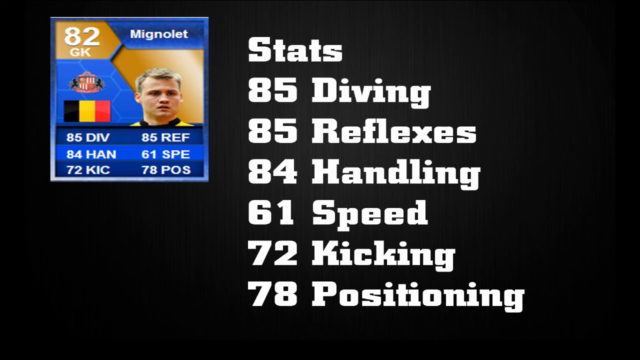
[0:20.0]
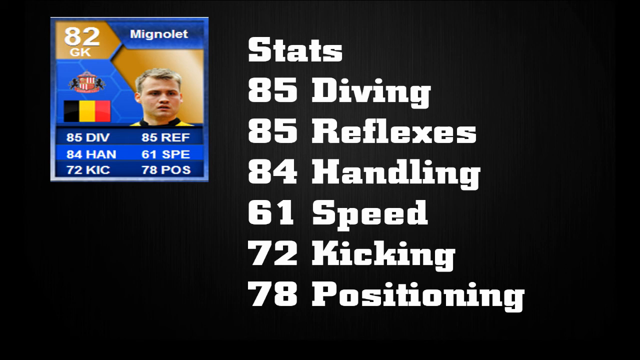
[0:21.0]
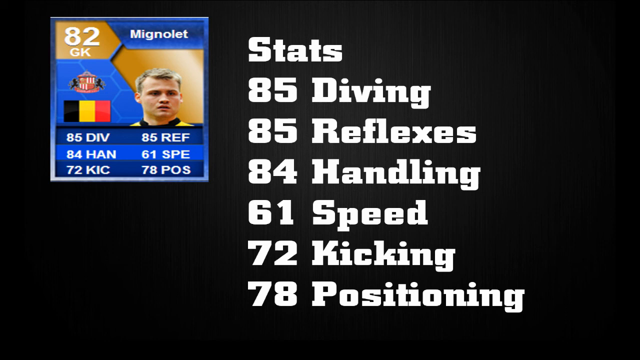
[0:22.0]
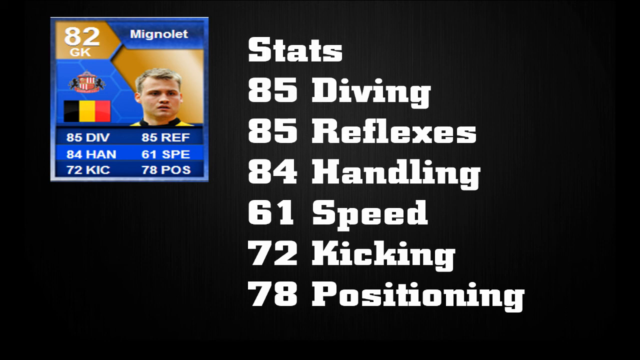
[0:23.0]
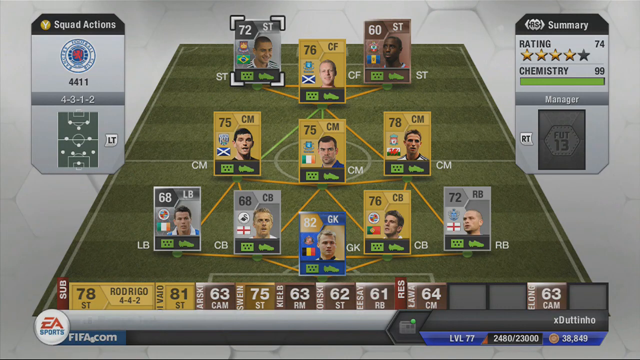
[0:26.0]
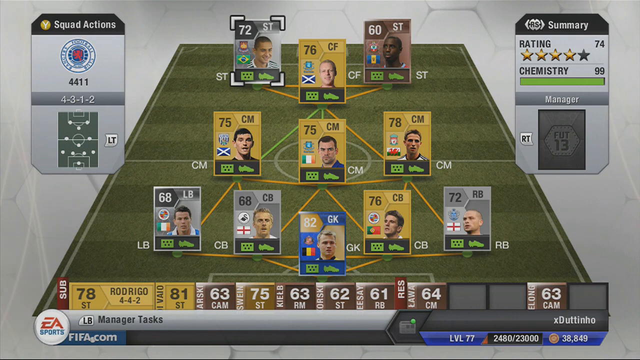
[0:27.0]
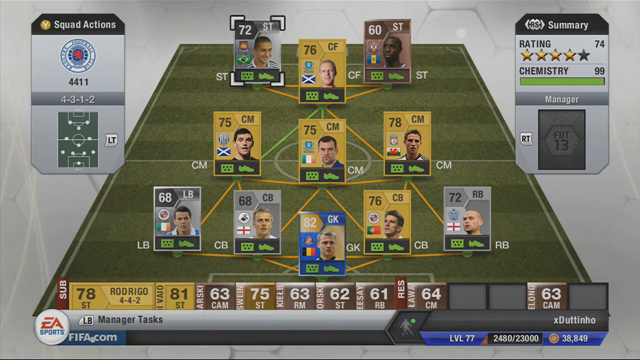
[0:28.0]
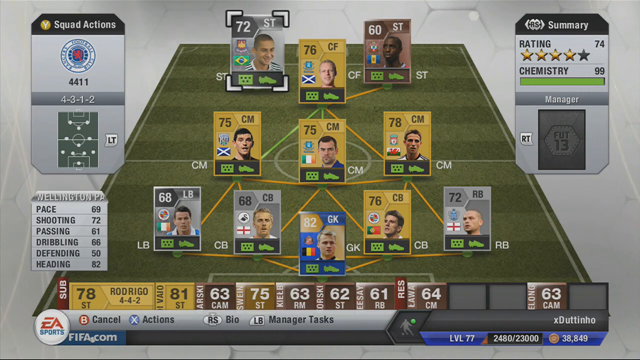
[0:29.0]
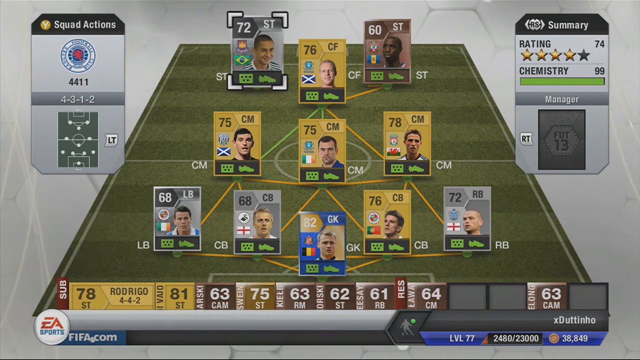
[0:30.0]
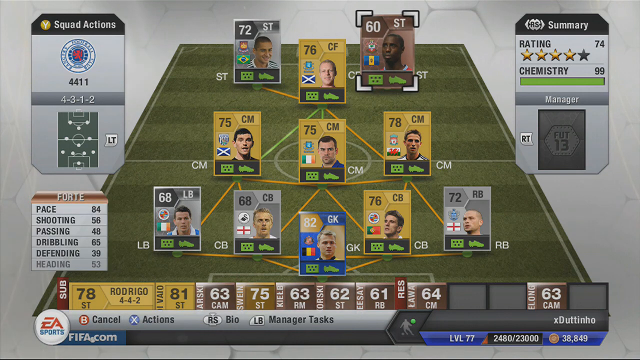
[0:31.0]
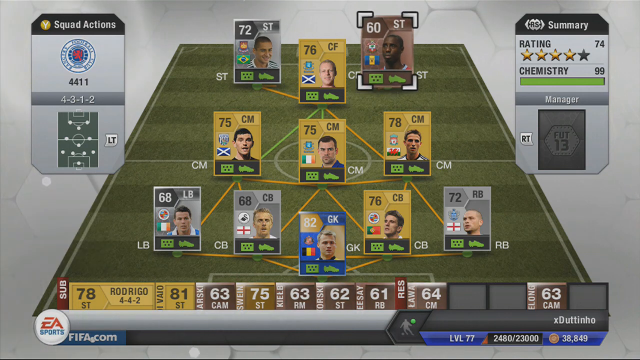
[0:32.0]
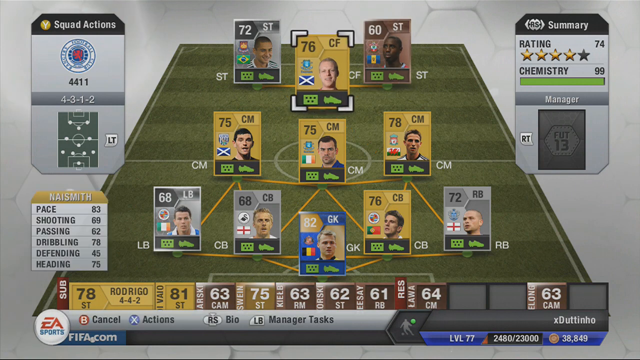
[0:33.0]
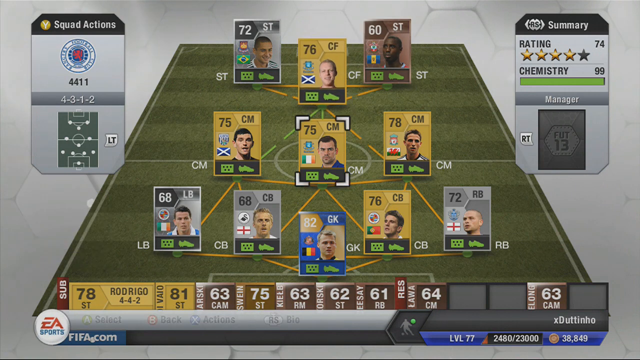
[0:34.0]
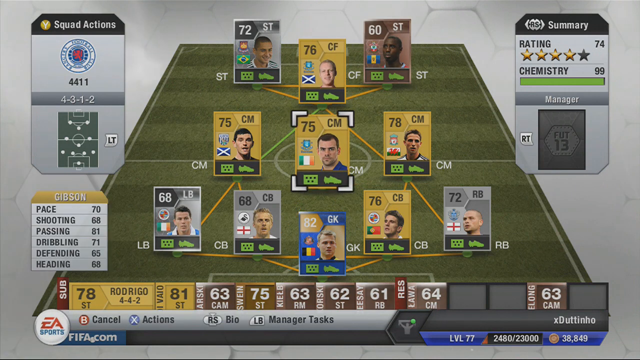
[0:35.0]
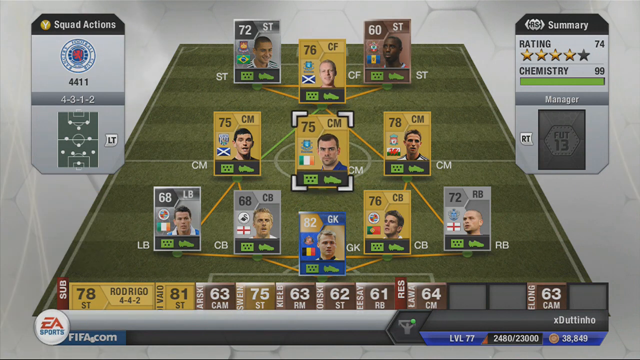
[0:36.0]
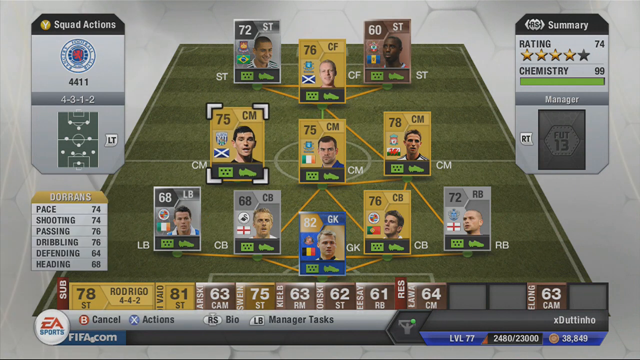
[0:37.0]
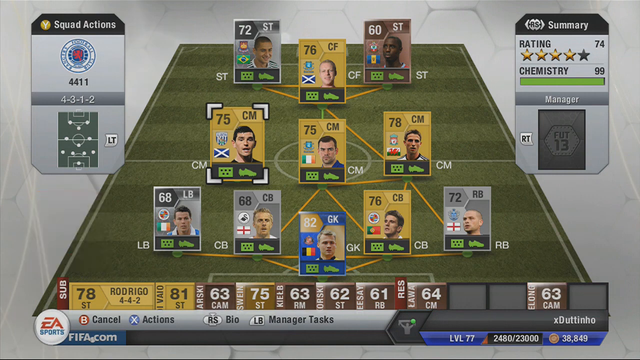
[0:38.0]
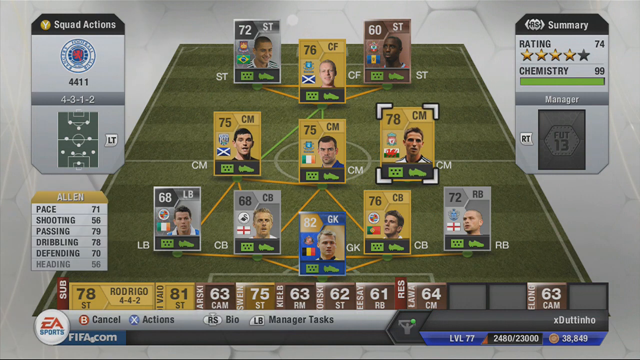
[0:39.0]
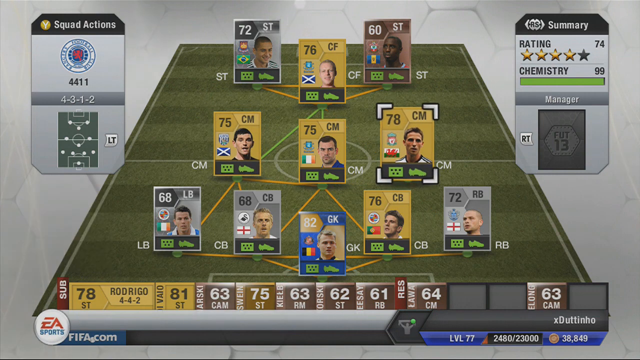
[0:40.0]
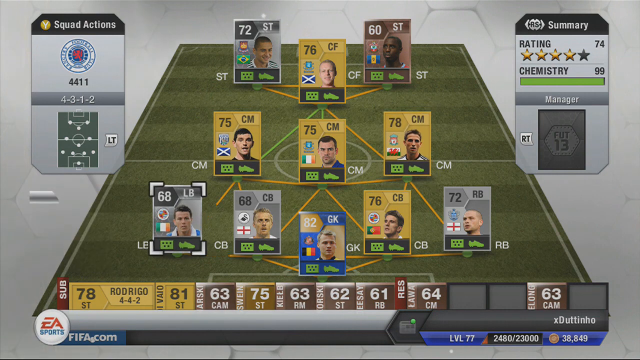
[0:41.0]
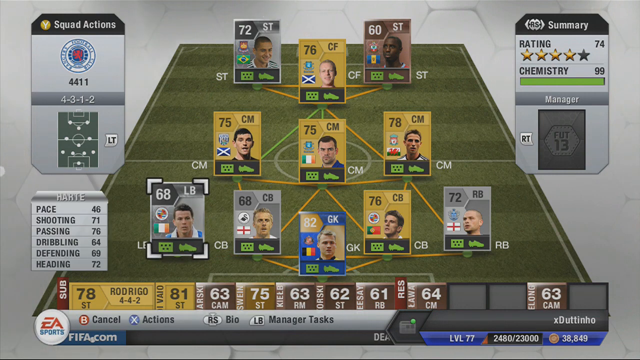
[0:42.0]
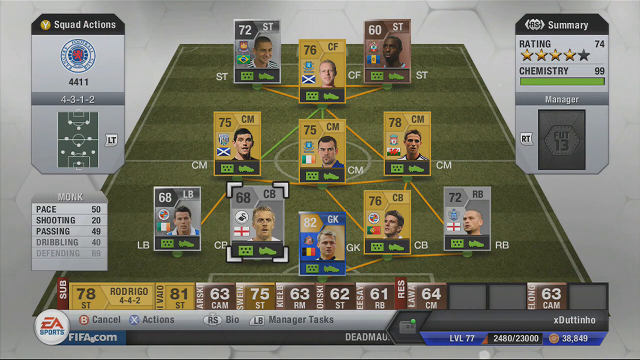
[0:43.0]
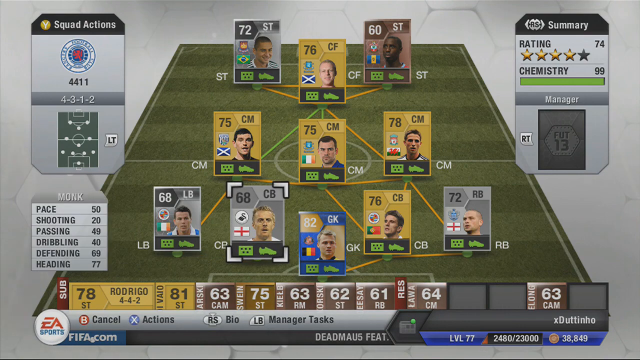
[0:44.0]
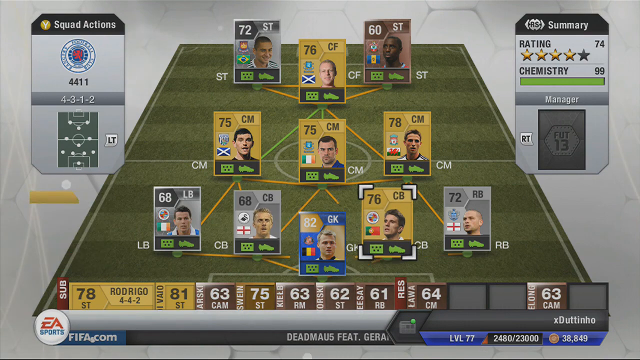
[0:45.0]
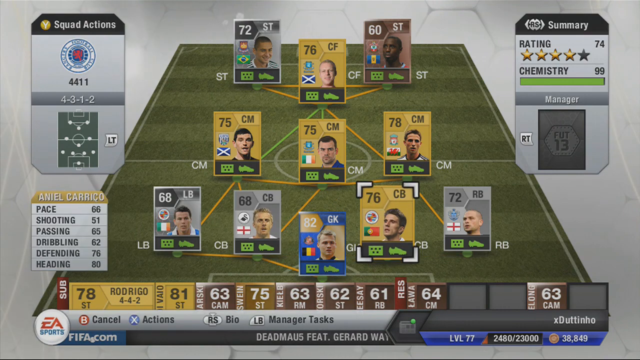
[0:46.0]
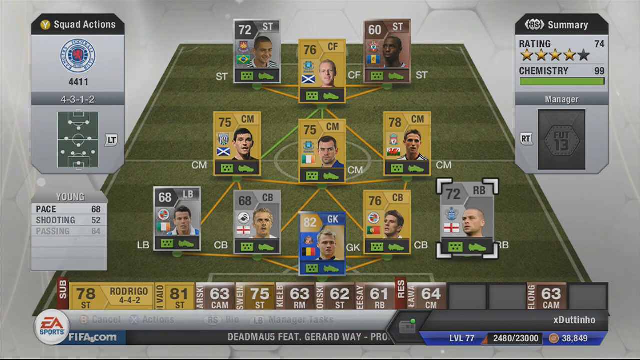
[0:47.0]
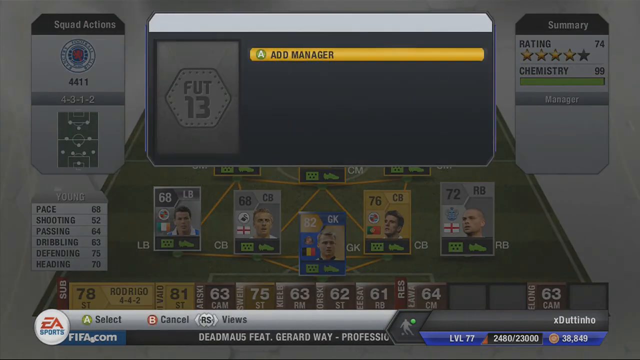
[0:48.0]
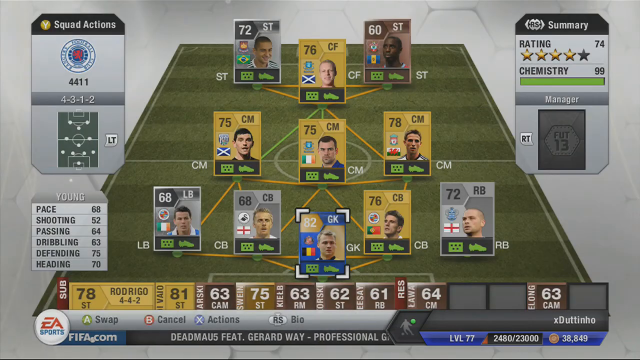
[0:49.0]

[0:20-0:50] On a black screen, a small blue square is in the top left corner. In its top left corner is a smaller gold square with "82GK" written inside it in white, and to the right, in the blue part, is "Mignolet" in white. Below that is a picture of a man with short blonde hair wearing a yellow shirt with a black collar, visible from the bottom of his neck up. To his left is a flag with a black stripe, a yellow stripe and a red stripe. Underneath, in white over blue, it reads "85 Div, 84 Hand, 72 KC," and to the right, from top to bottom, "85 Ref, 61 SPE, 78 POS." To the right of the picture, from top to bottom in white, is a list of stats: "85 diving," "85 reflexes," "84 handling," "61 speed," "72 kicking," "78 positioning." The video then cuts to a video game soccer field. At the top are three cards with men's faces on them, under those are three more cards with men's faces, and under those is a row of five.